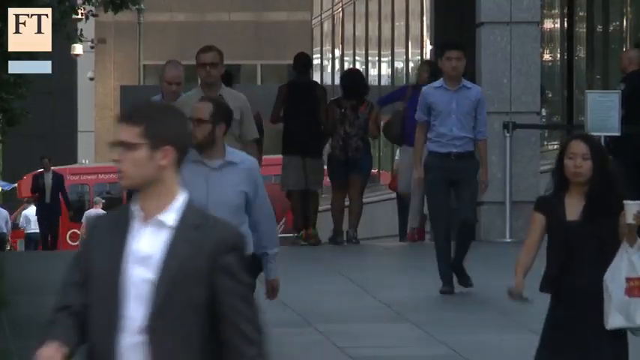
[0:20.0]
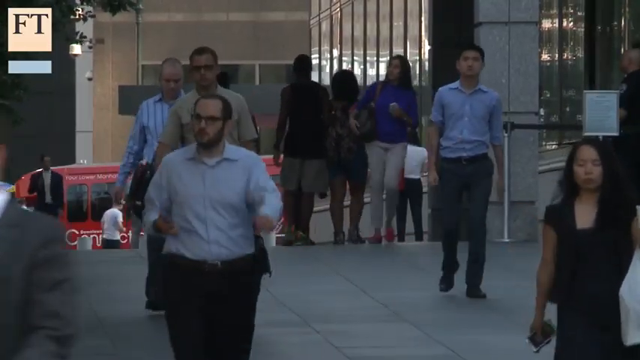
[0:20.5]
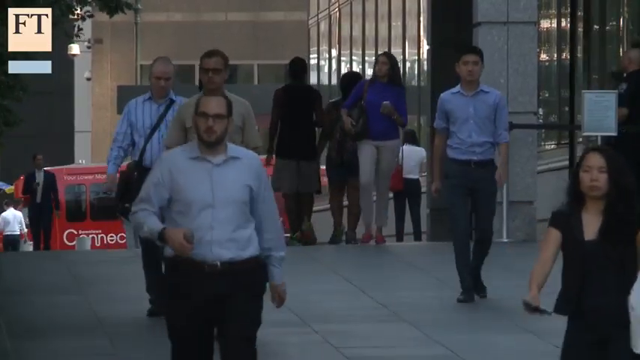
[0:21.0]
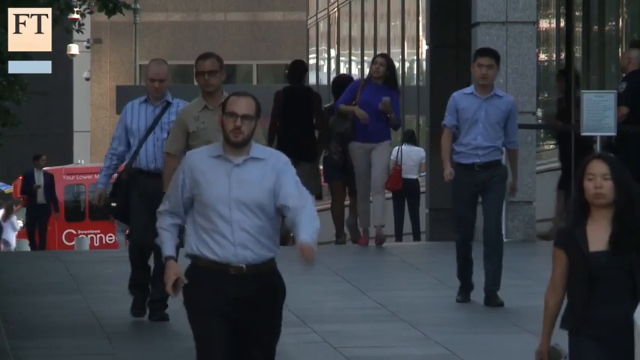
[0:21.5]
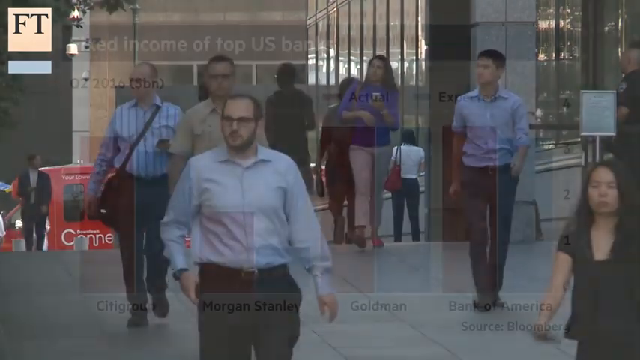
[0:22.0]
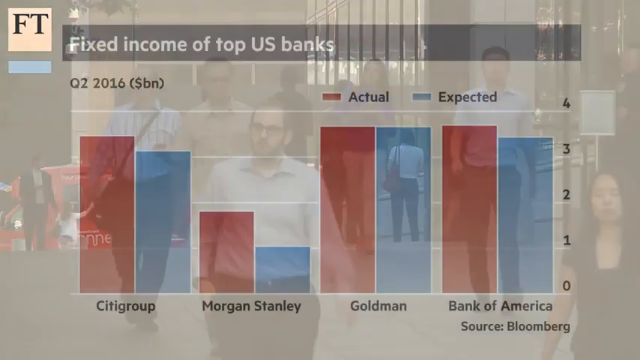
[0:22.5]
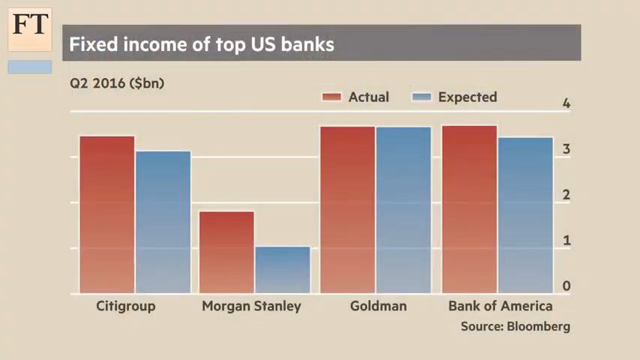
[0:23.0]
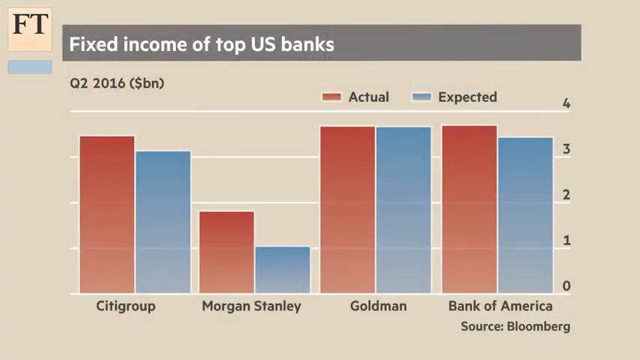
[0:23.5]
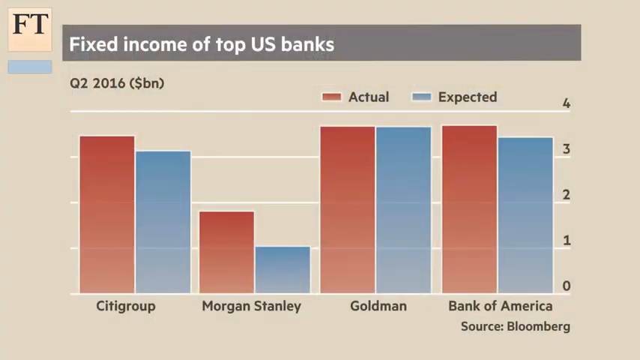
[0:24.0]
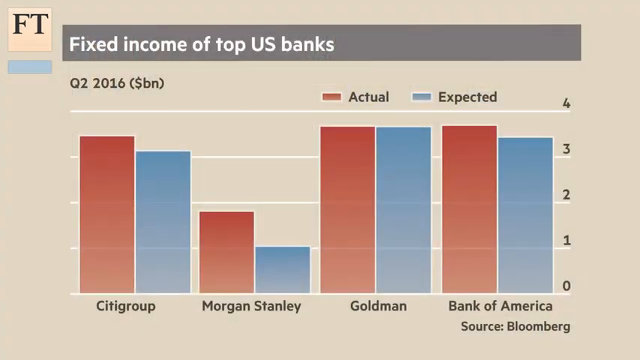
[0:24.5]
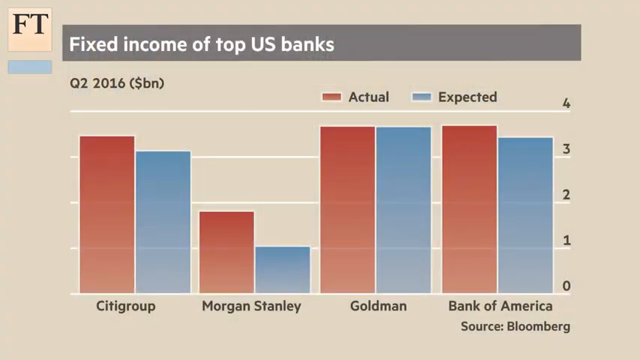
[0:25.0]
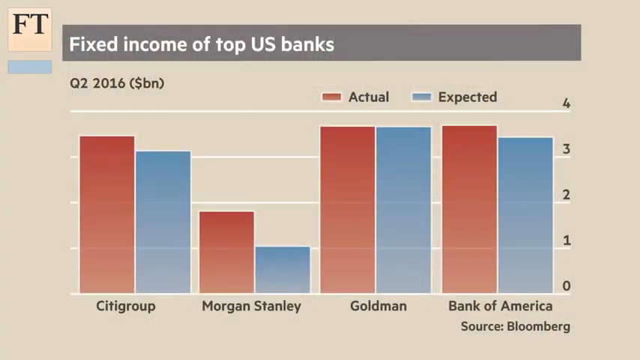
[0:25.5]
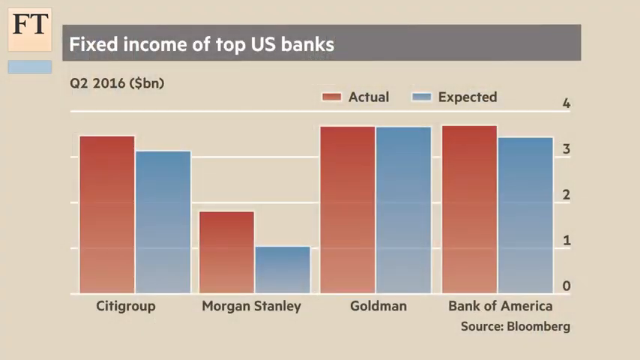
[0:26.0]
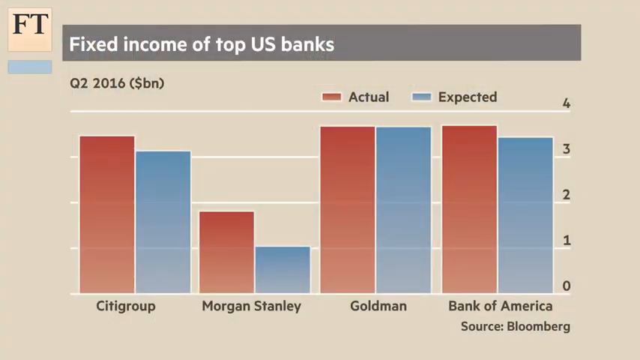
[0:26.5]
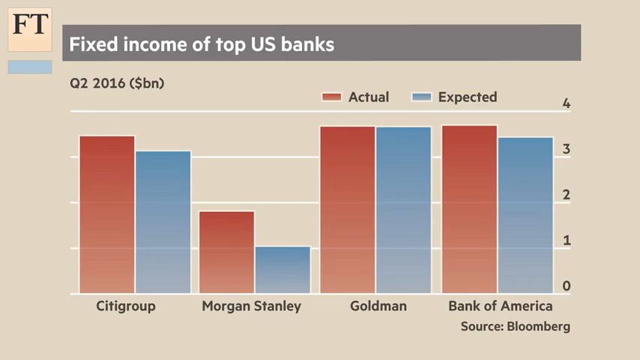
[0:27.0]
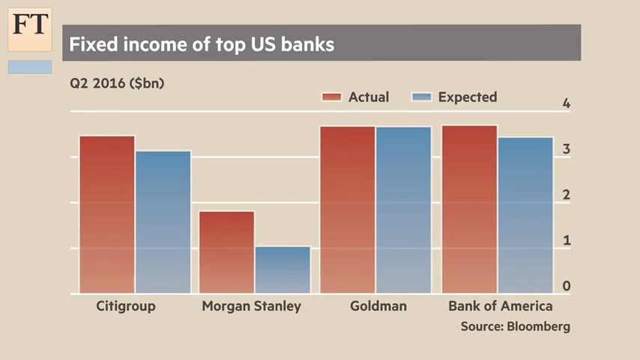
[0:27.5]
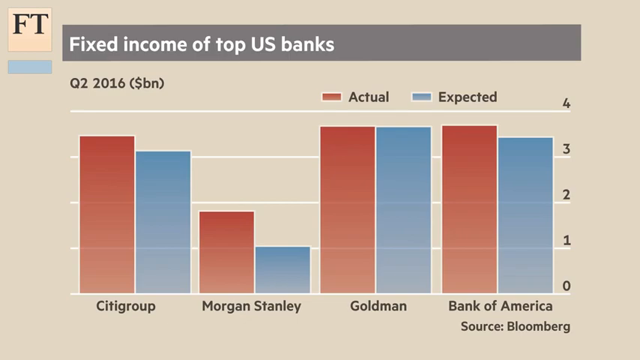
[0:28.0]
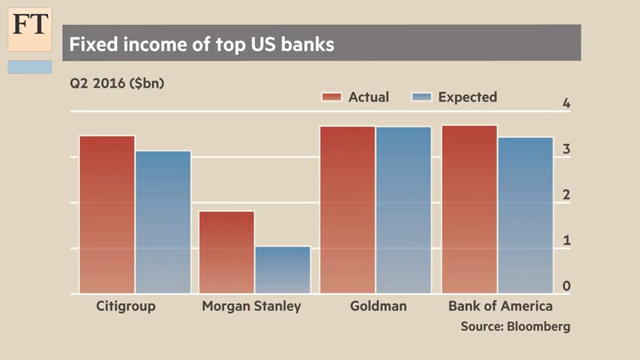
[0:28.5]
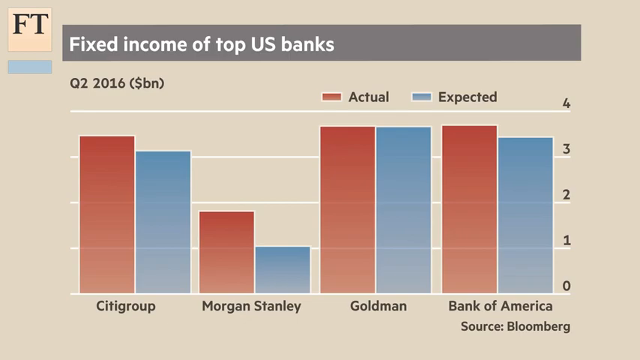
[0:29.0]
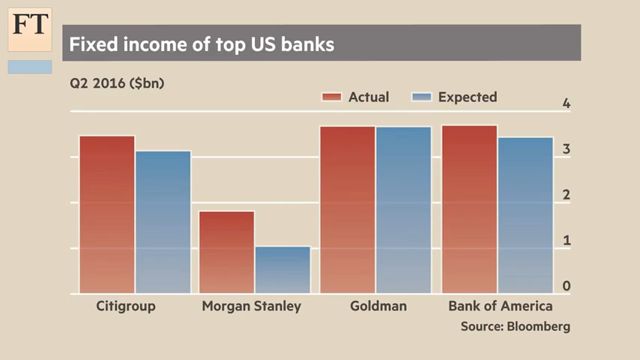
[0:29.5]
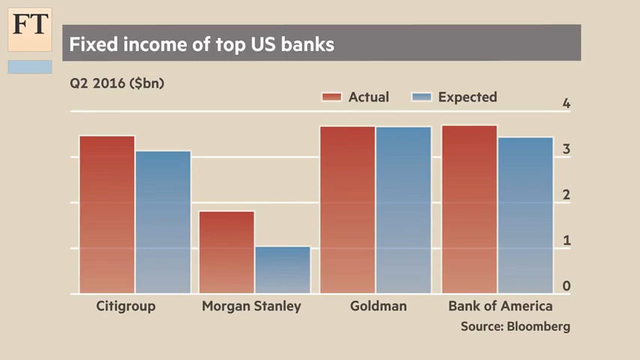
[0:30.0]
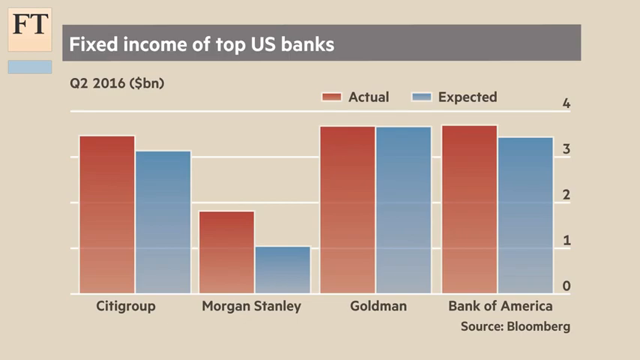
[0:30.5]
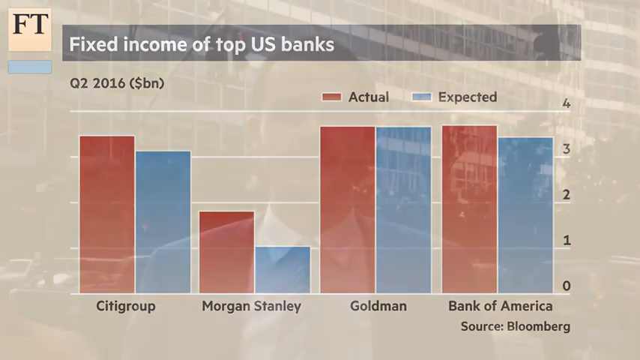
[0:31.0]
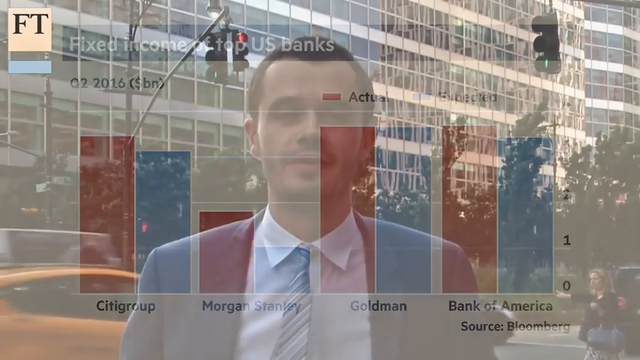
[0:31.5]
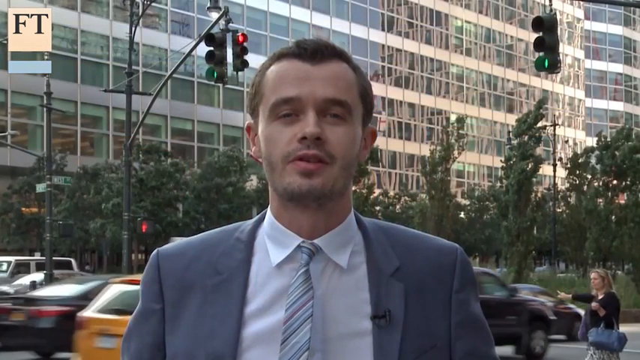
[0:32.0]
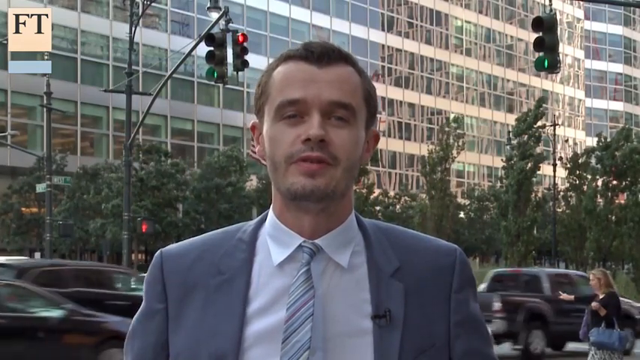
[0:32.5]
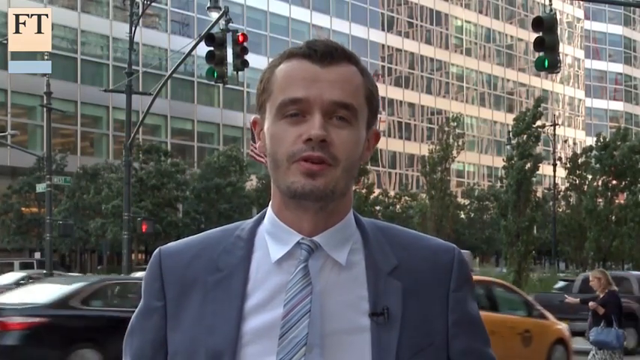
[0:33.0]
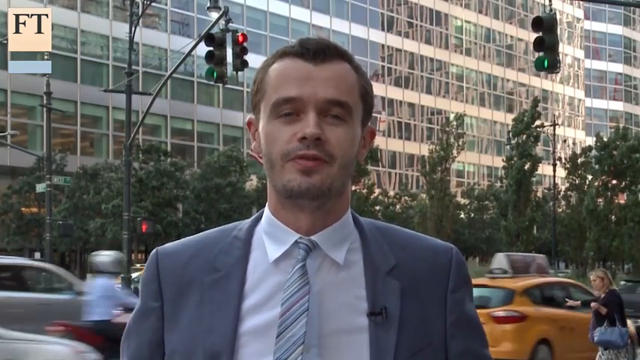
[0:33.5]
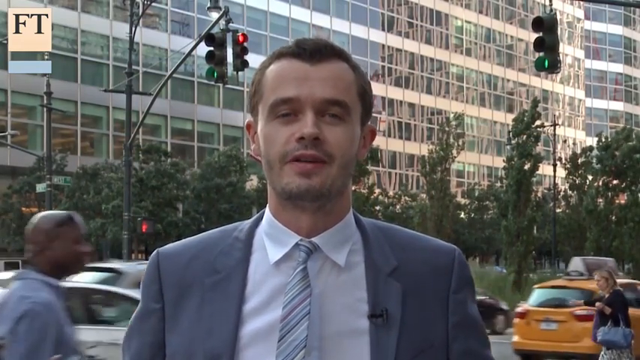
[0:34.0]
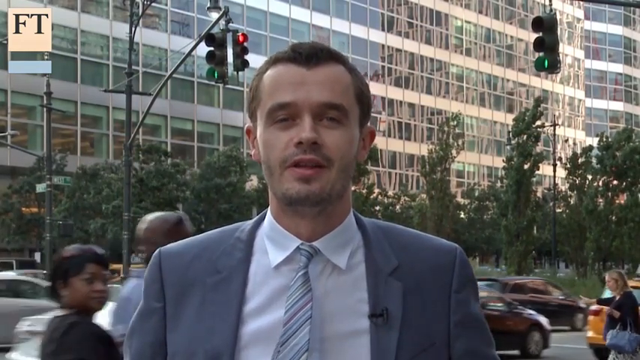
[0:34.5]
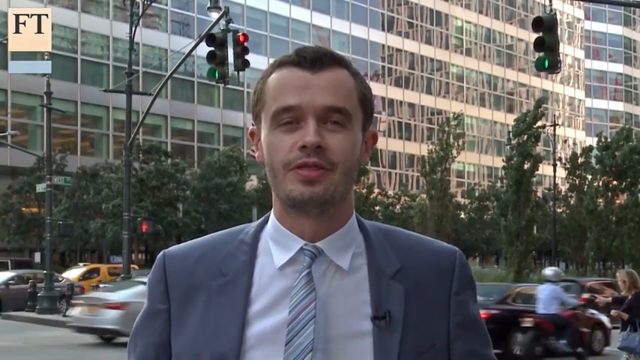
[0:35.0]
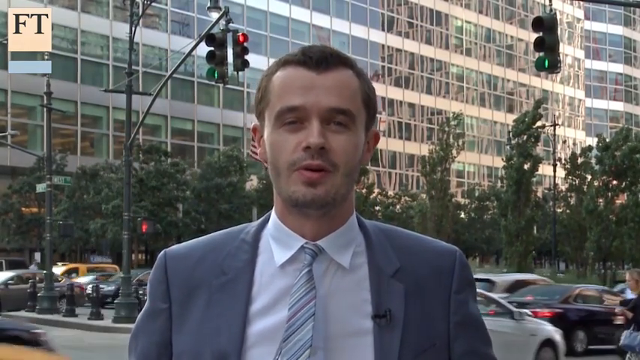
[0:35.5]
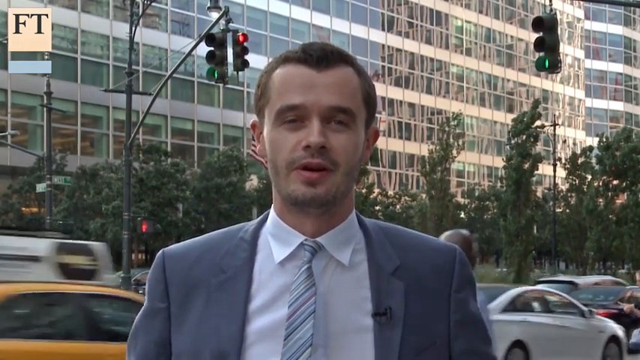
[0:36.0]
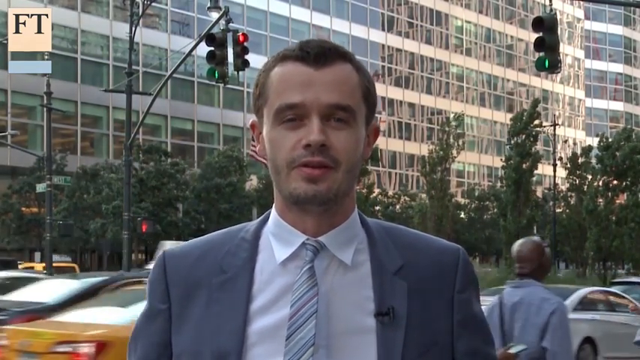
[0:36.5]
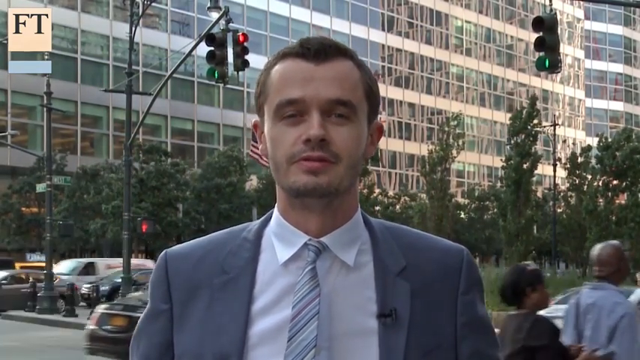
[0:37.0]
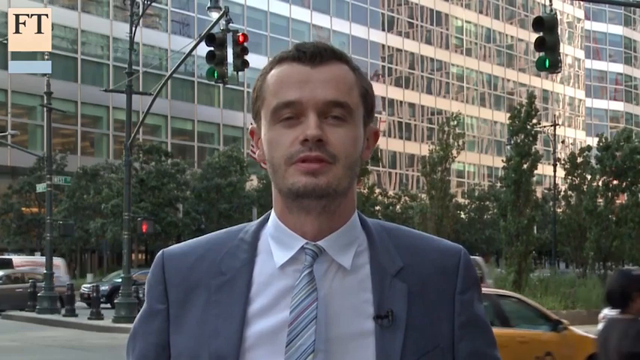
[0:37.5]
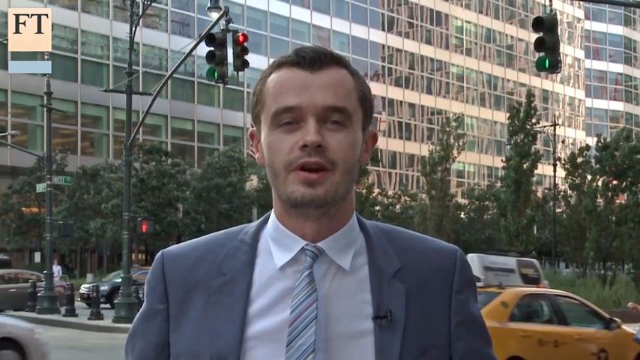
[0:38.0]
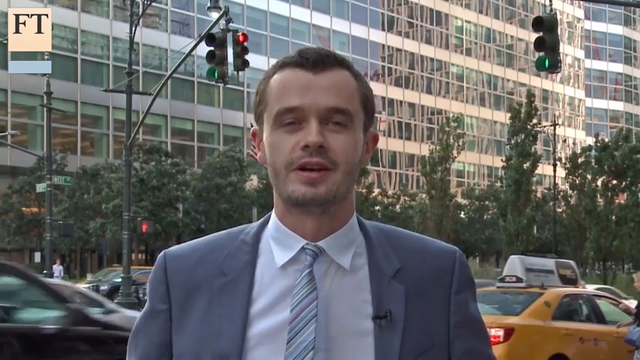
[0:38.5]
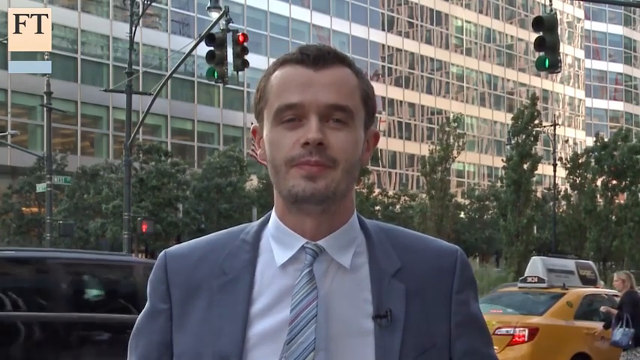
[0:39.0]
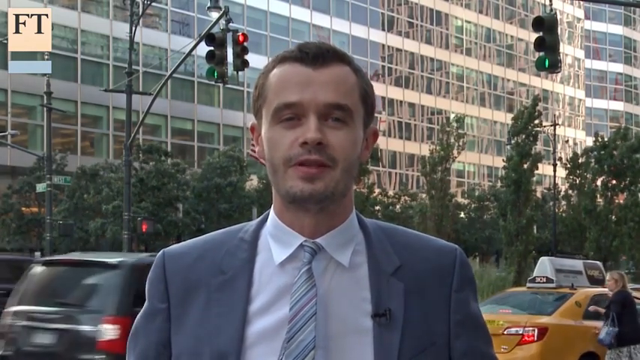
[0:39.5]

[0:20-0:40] People in New York walk along the sidewalk next to buildings. A bar graph appears that says "fixed income of top US banks," for the second quarter of 2016, with actual values in orange and expected values in light blue. "FT" appears in a box in the upper left-hand corner. The names underneath are Citigroup, Morgan Stanley, Goldman and Bank of America; Morgan Stanley has the lowest actual and lowest expected values, while Goldman Sachs and Bank of America have the highest. The source is Bloomberg. The video then shows the man, a US correspondent for the Financial Times. Behind him a woman opens the back door of a taxi to take a ride. People walk along the street and bicycle riders ride by.